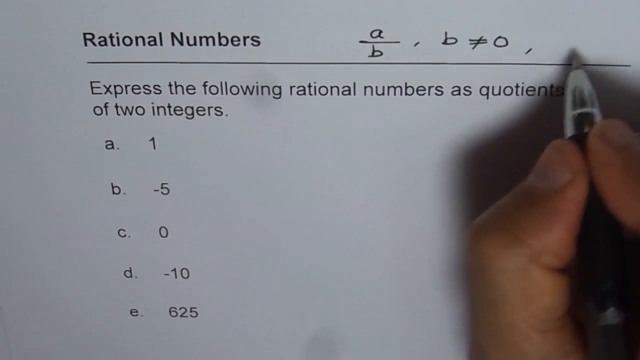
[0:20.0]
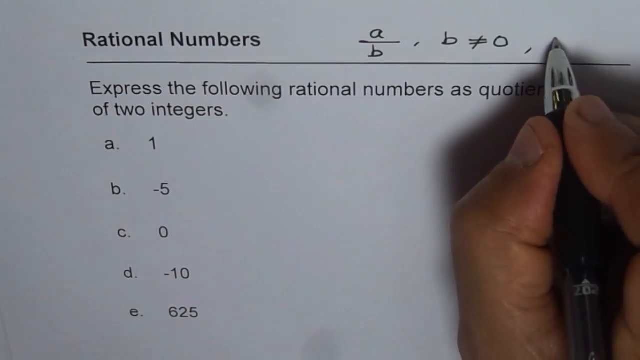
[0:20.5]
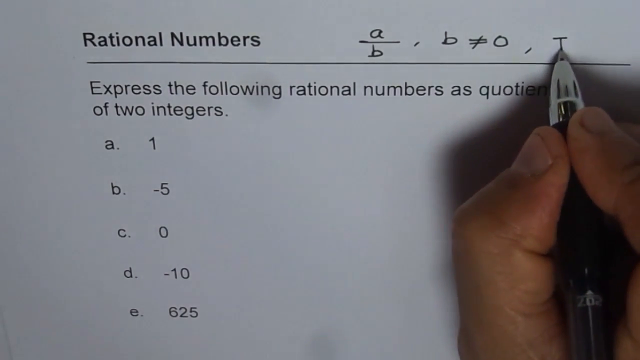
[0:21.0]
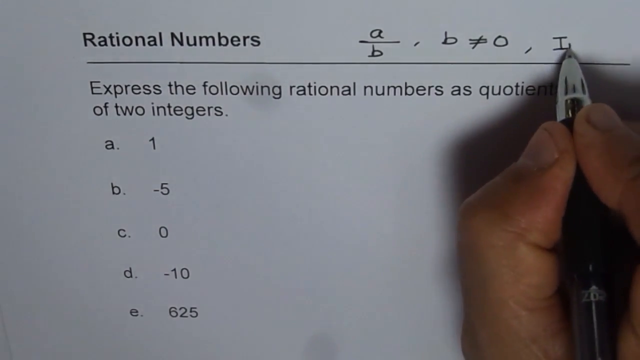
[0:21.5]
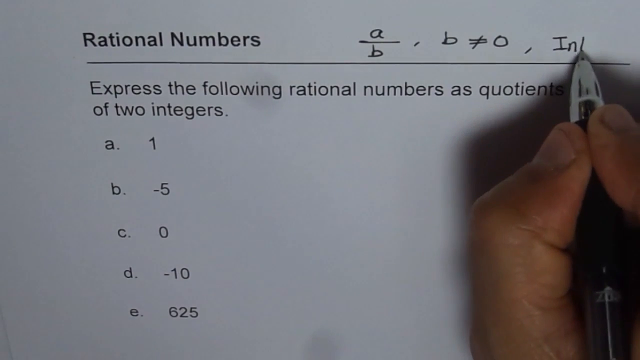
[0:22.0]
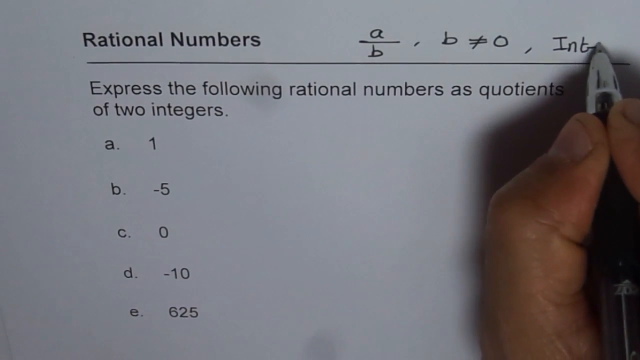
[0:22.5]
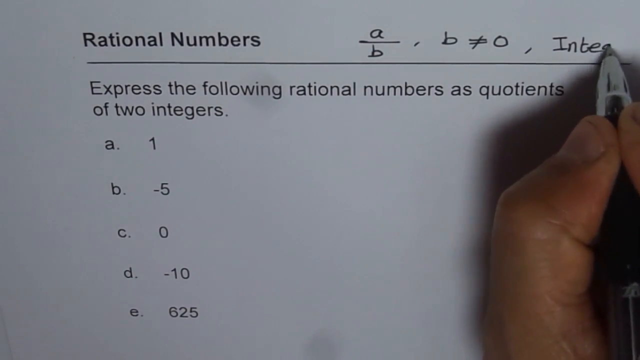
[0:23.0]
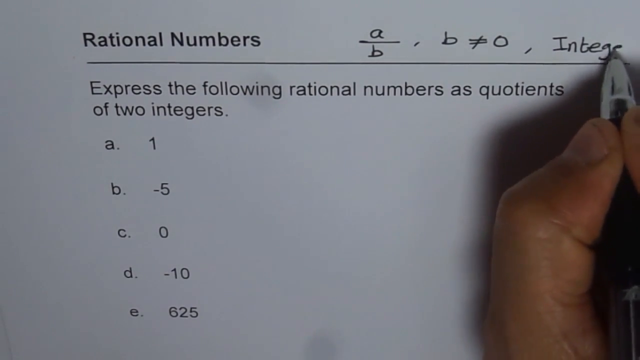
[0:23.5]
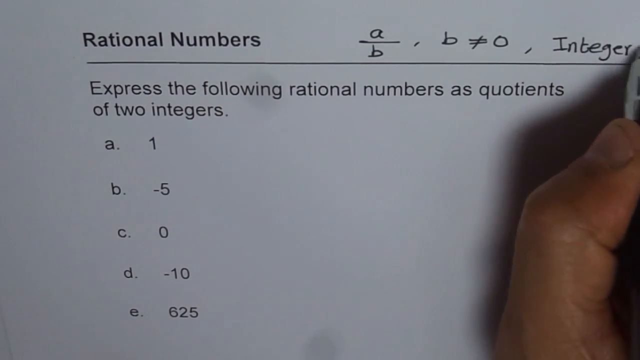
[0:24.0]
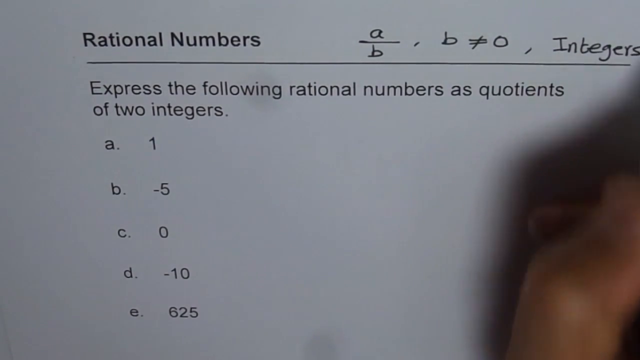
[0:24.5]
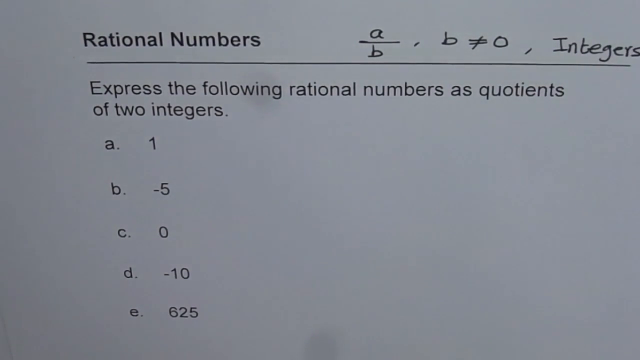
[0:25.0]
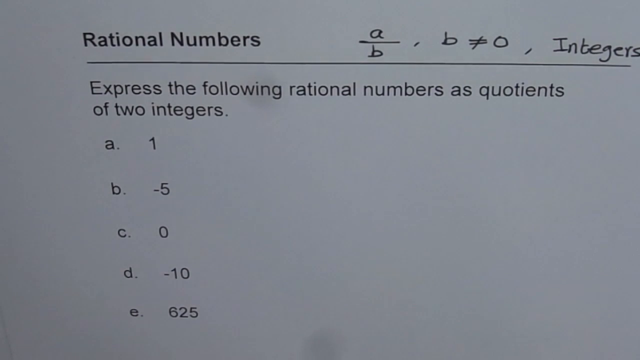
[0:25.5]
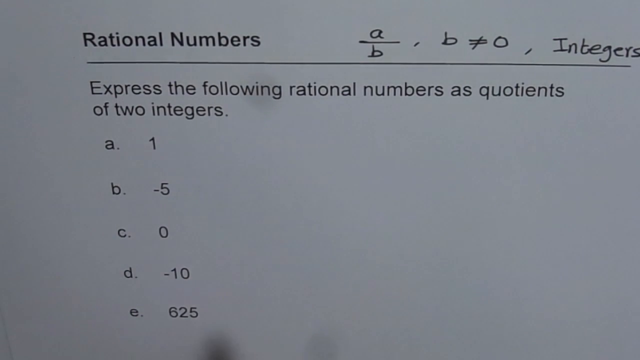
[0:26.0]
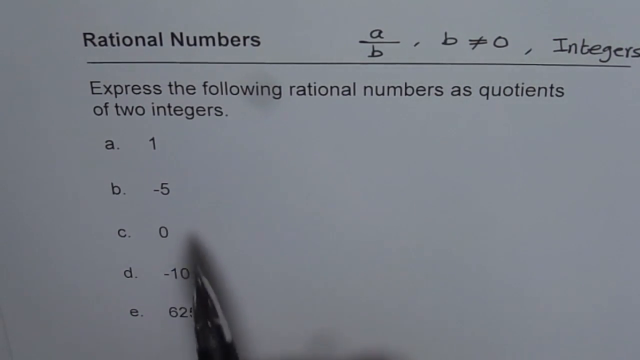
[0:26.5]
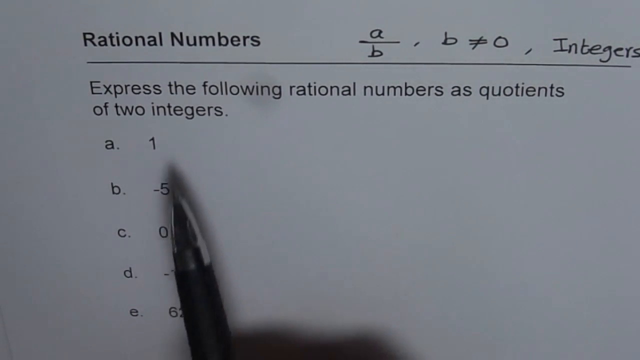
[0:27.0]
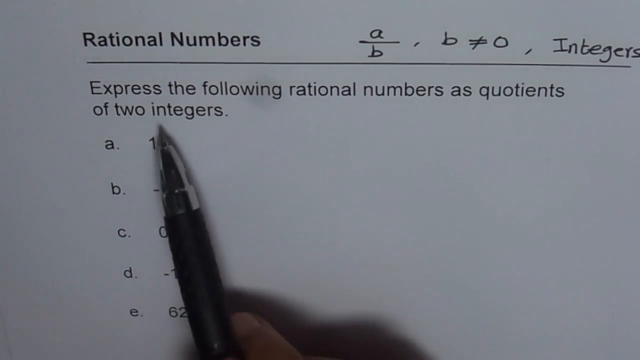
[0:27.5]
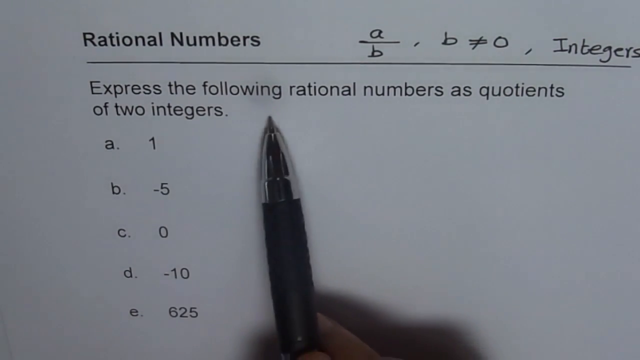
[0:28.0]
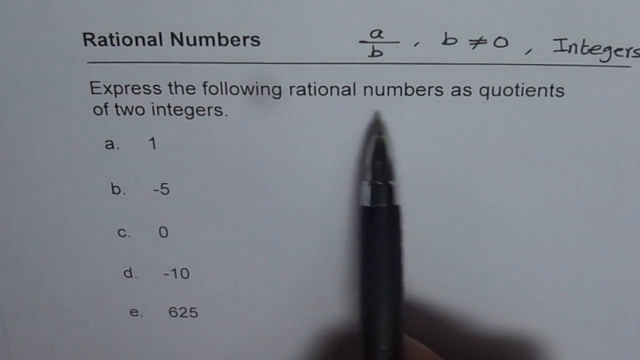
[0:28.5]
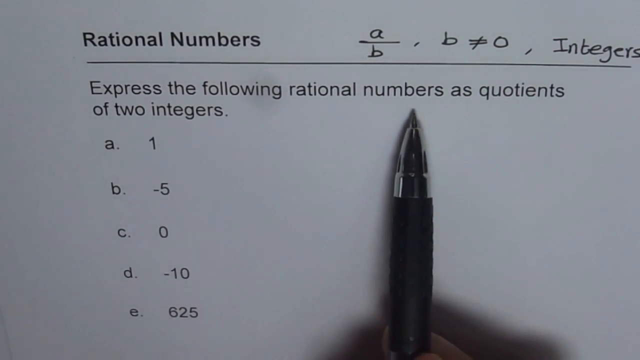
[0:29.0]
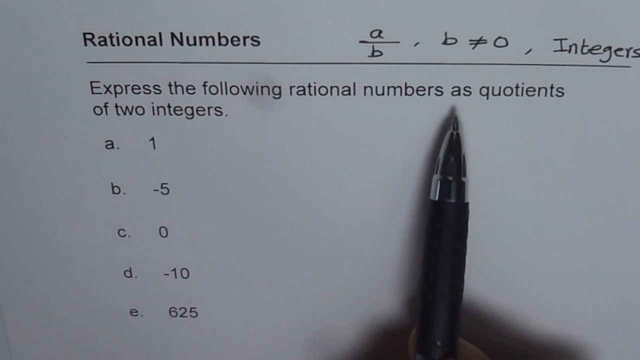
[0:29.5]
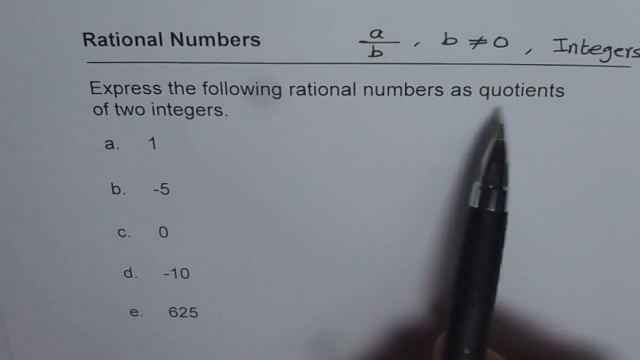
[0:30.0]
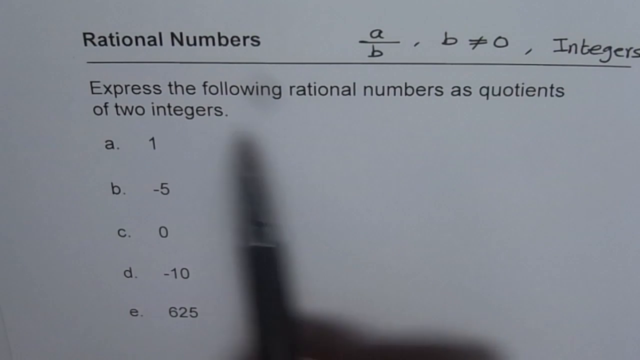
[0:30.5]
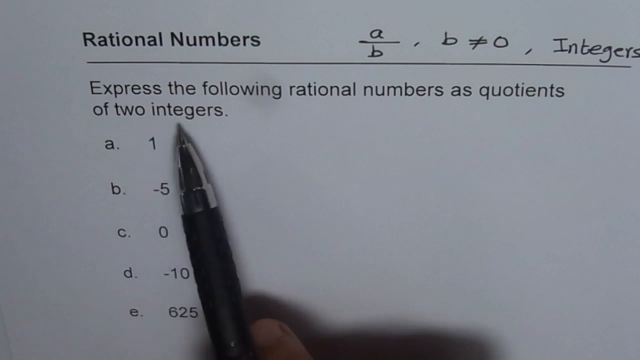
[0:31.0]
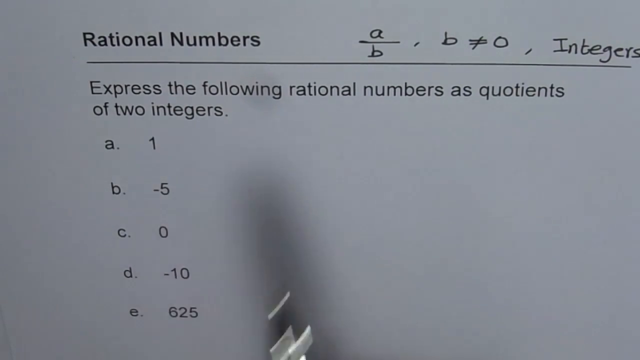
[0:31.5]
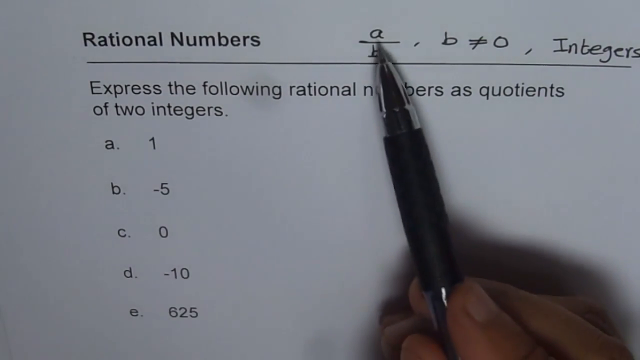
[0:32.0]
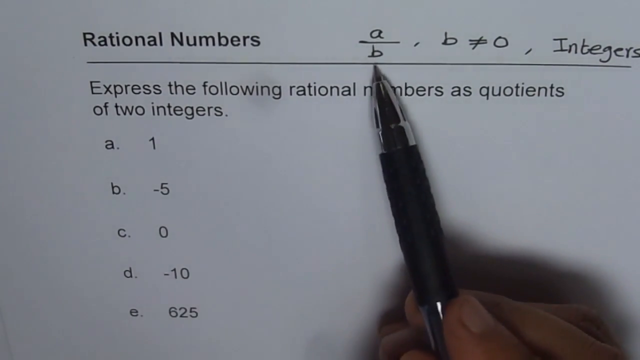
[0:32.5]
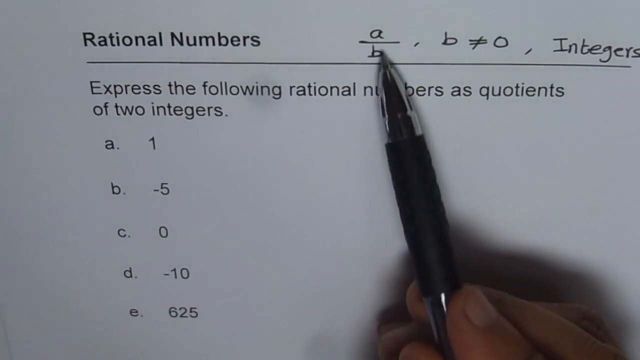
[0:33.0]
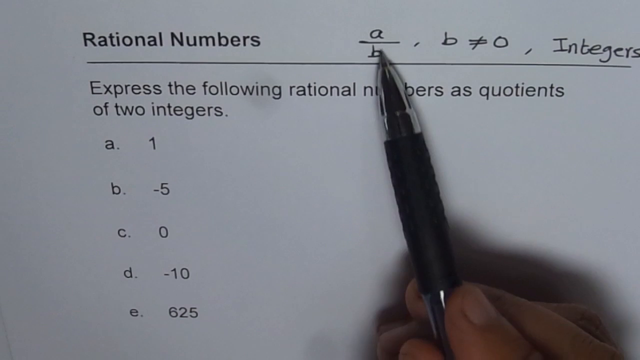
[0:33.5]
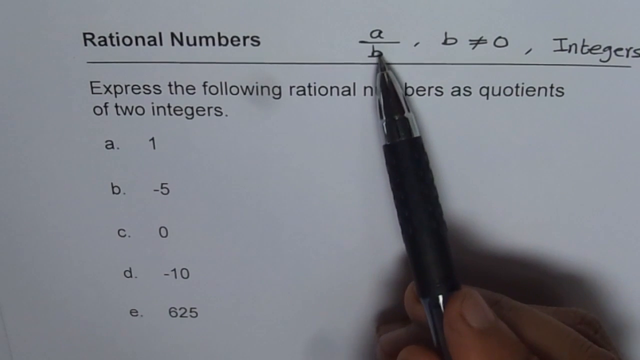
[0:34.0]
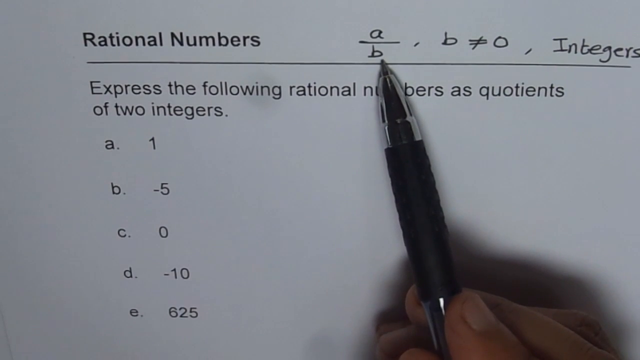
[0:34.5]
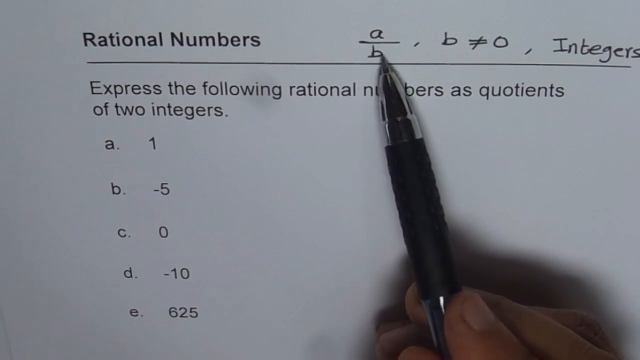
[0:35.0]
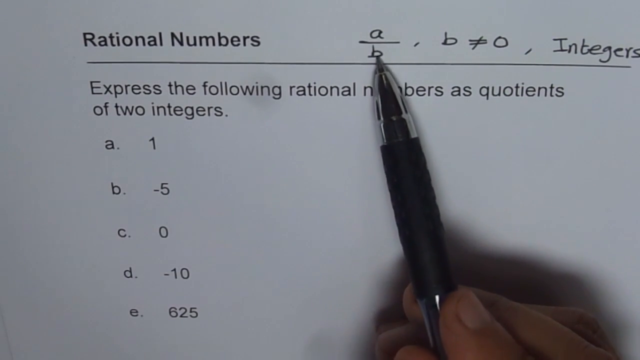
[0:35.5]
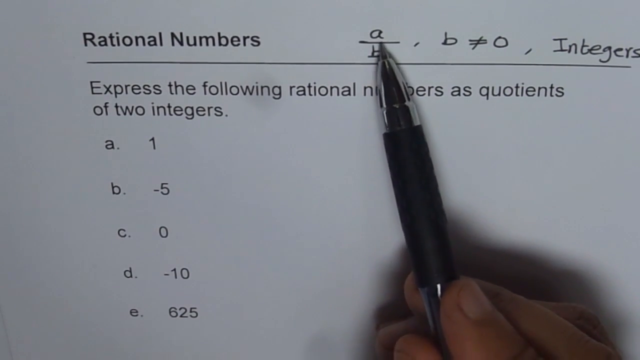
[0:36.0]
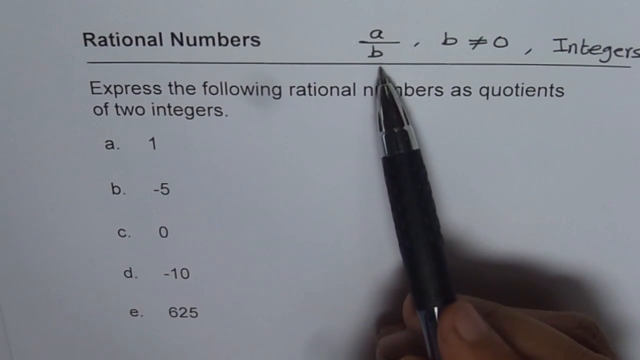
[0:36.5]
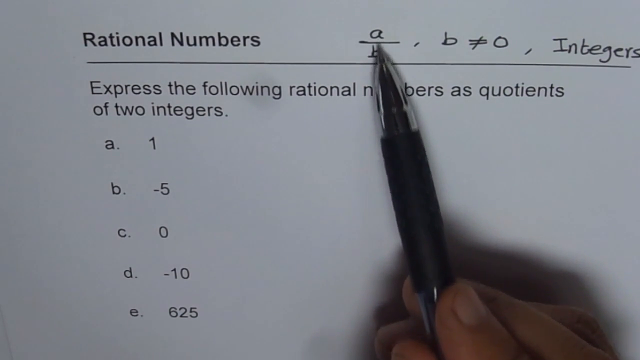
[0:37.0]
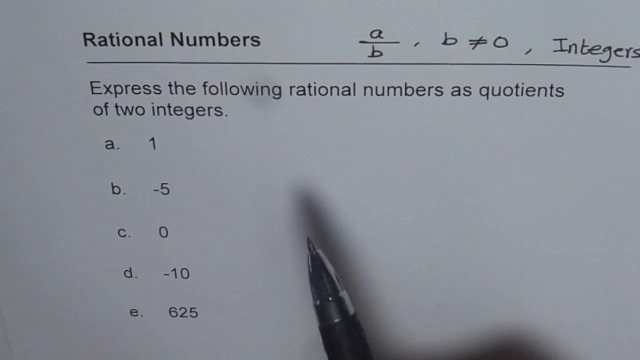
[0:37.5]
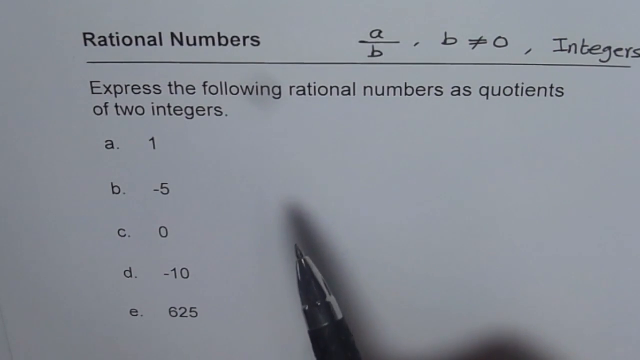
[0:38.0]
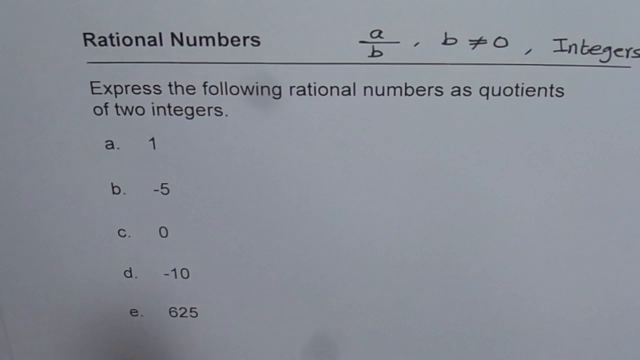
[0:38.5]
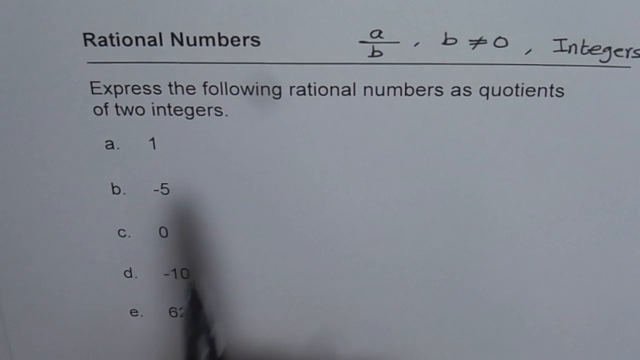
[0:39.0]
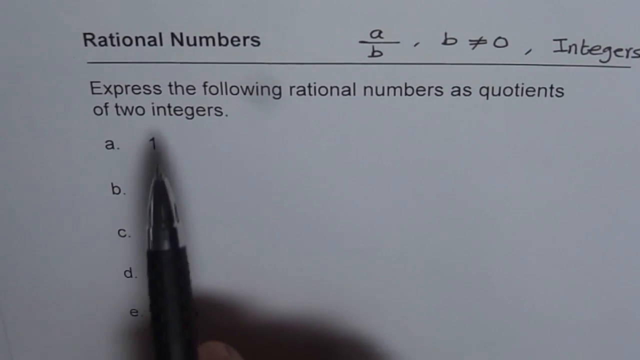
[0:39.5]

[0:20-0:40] The same question asks to express the following rational numbers as quotients of two integers; it is not multiple choice, and every number must be expressed: a is 1, b is minus 5, c is 0, d is minus 10, and e is 625. A hand with light brownish skin and very short-cut nails holds a pen with a black body and a silver tip that writes in black. The person writes at the top of the page a over b, b does not equal 0, and then the word "integers". He moves the pen and slowly points below the words "express the following rational numbers as quotients", then points to the a over b, and then moves back to the sentence of the question.